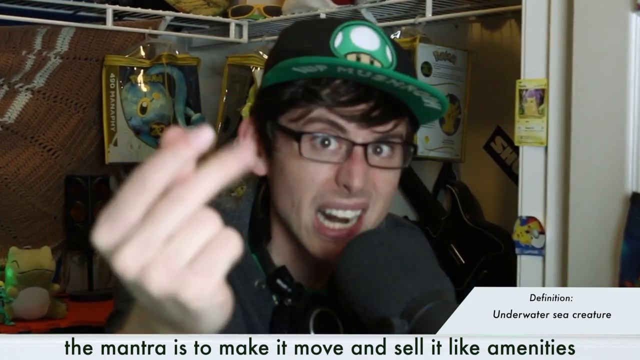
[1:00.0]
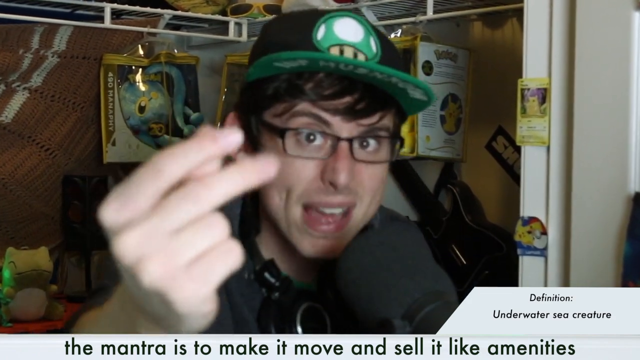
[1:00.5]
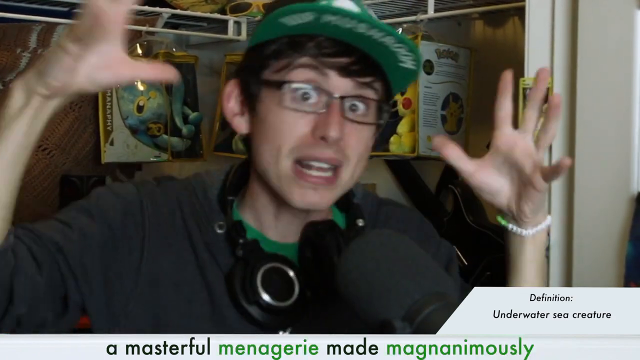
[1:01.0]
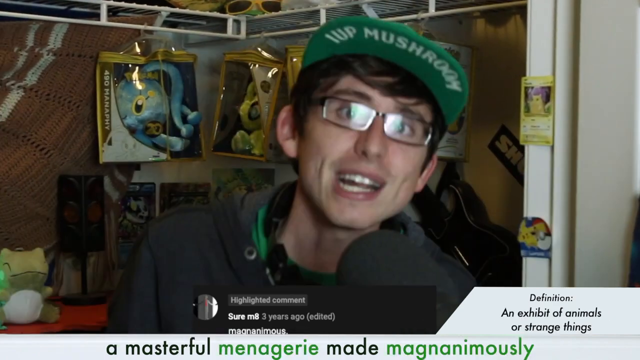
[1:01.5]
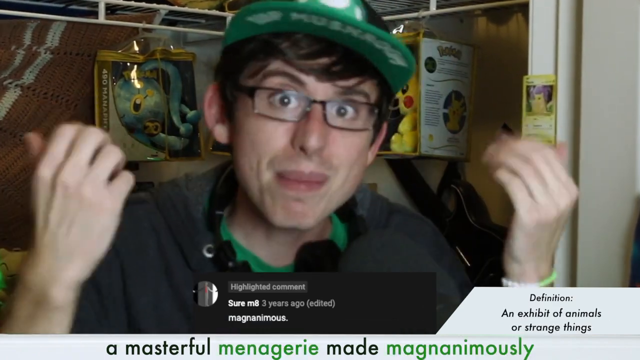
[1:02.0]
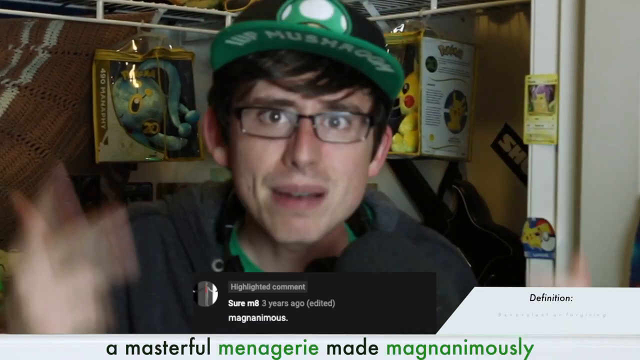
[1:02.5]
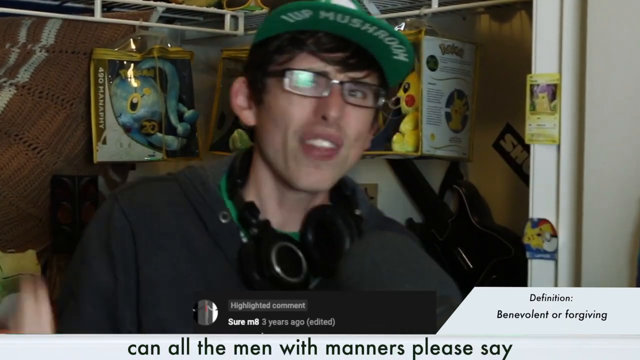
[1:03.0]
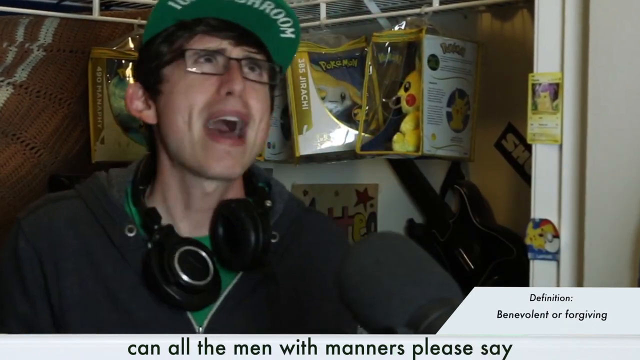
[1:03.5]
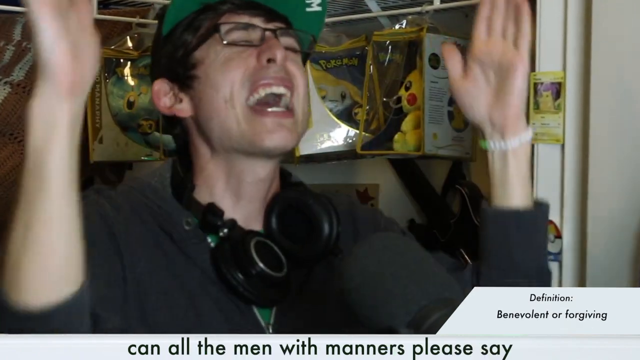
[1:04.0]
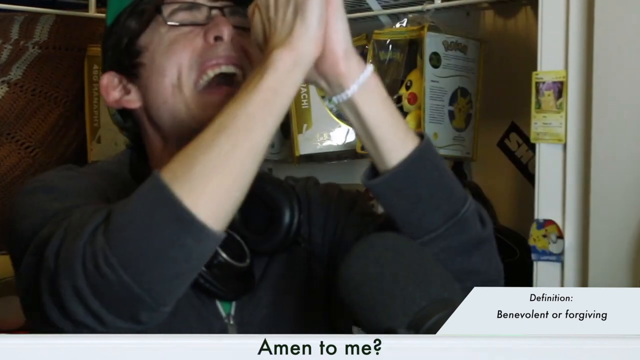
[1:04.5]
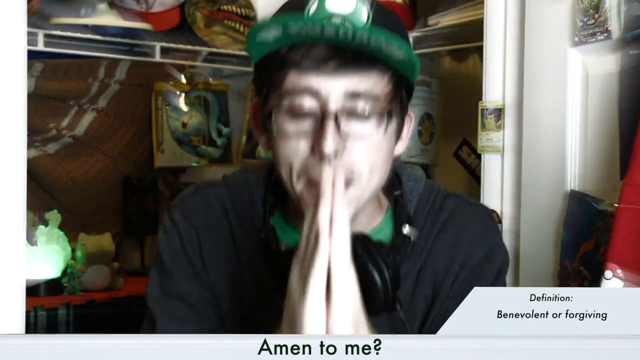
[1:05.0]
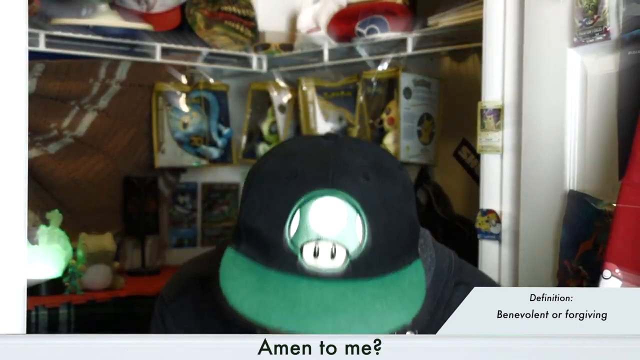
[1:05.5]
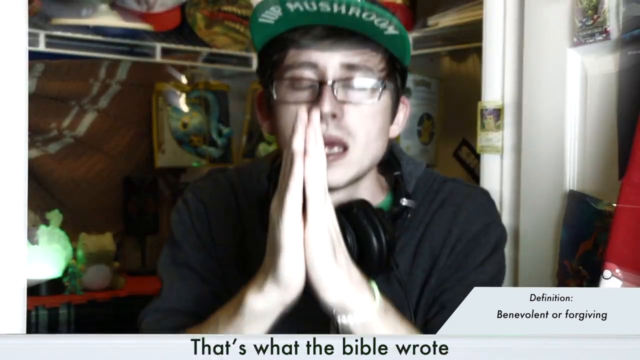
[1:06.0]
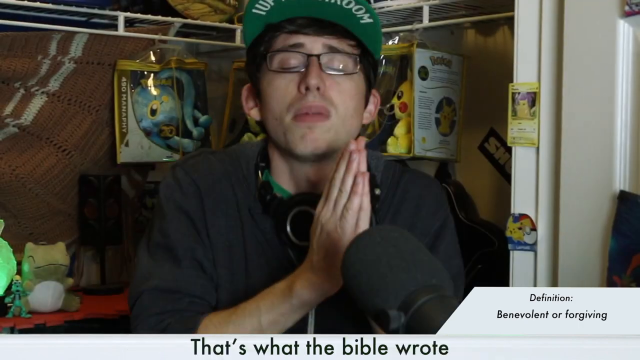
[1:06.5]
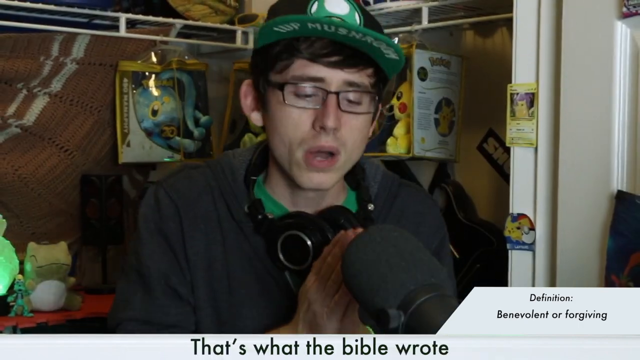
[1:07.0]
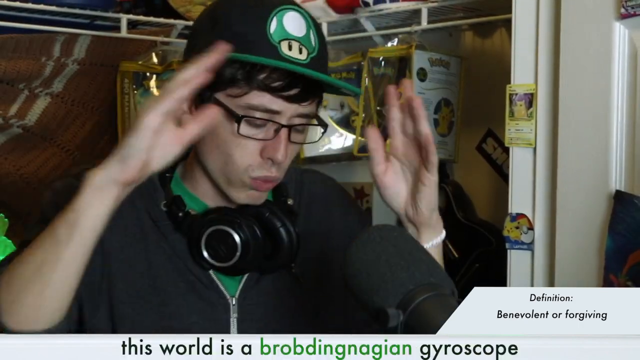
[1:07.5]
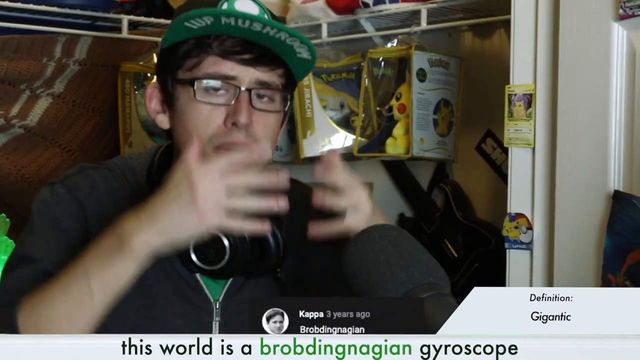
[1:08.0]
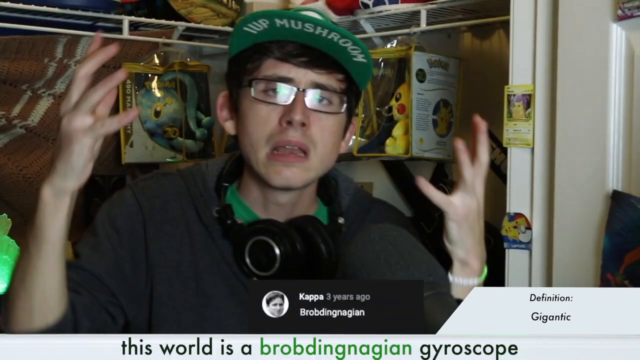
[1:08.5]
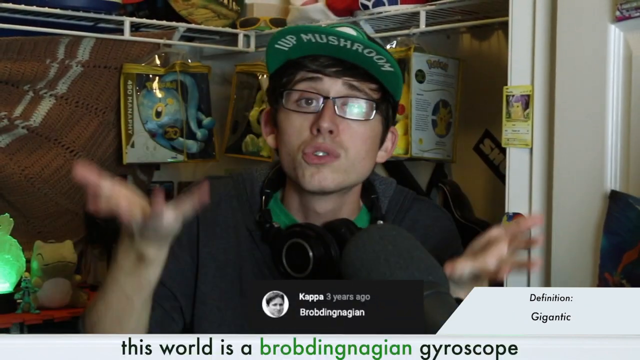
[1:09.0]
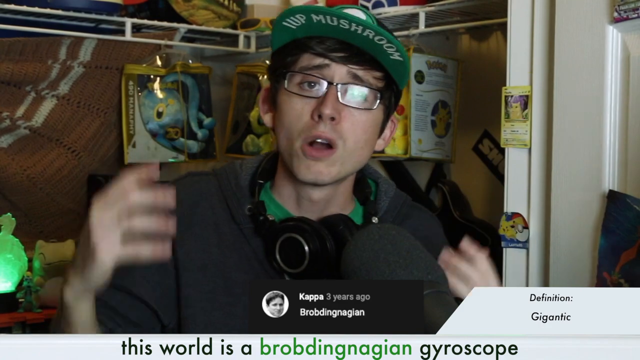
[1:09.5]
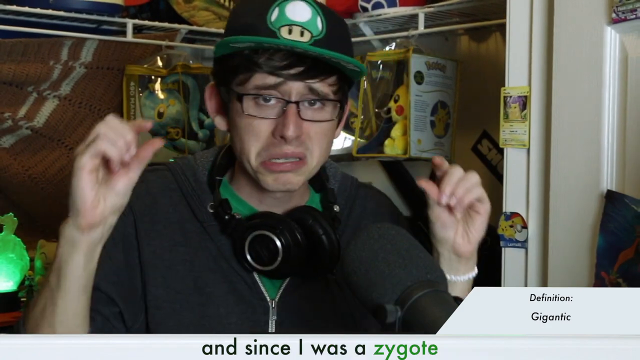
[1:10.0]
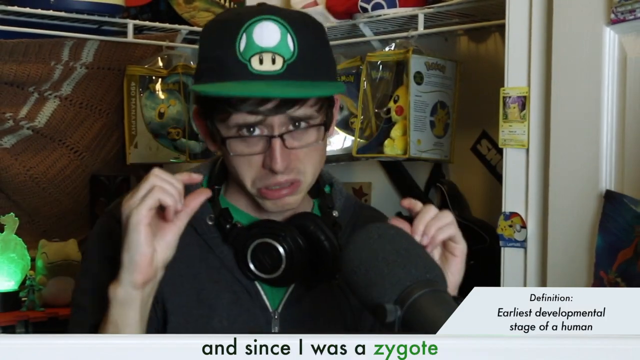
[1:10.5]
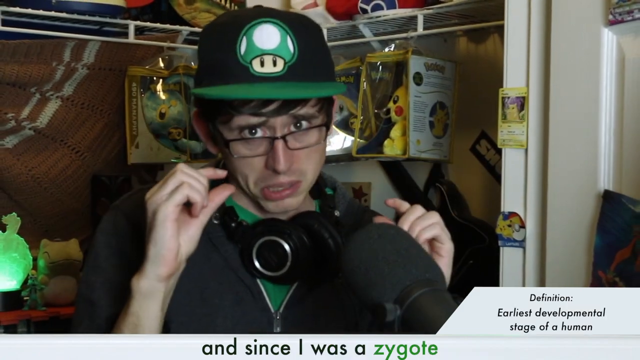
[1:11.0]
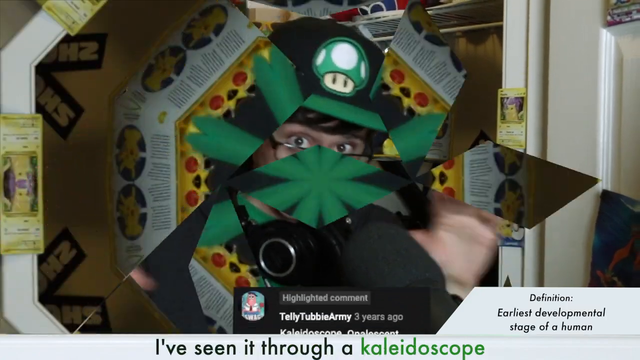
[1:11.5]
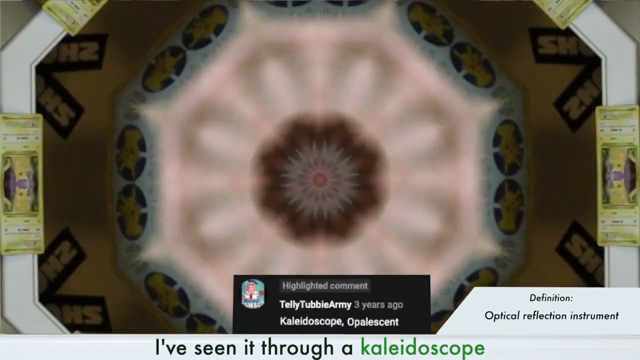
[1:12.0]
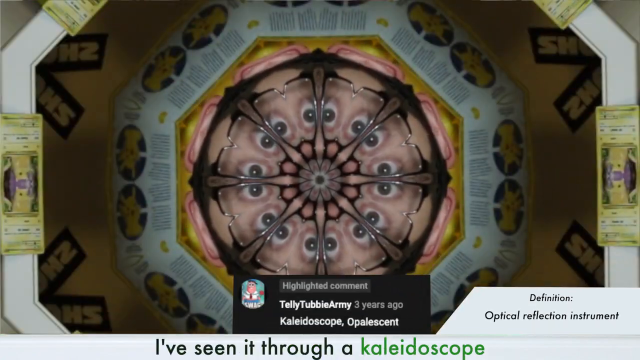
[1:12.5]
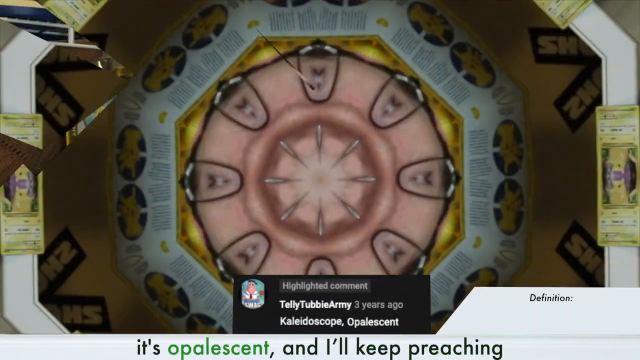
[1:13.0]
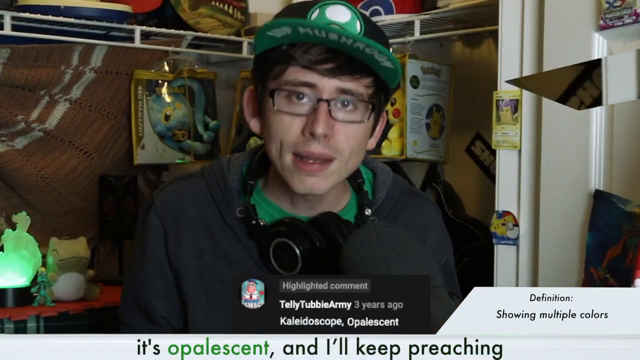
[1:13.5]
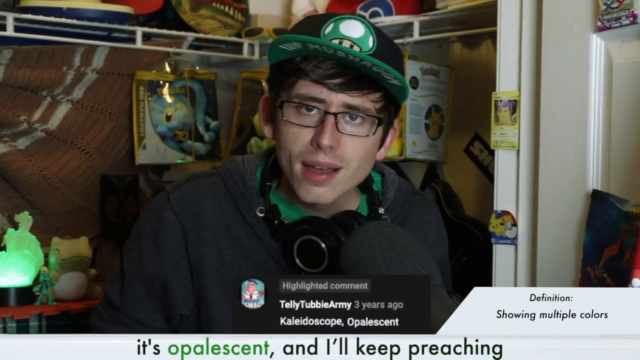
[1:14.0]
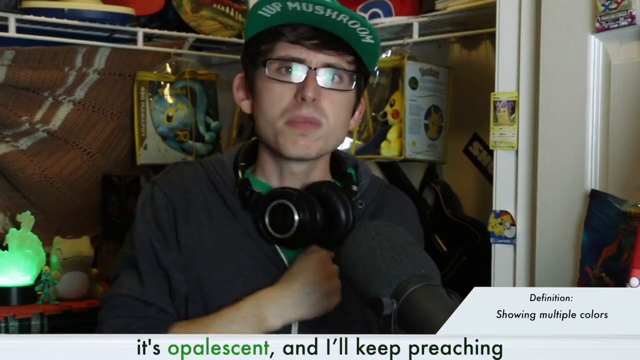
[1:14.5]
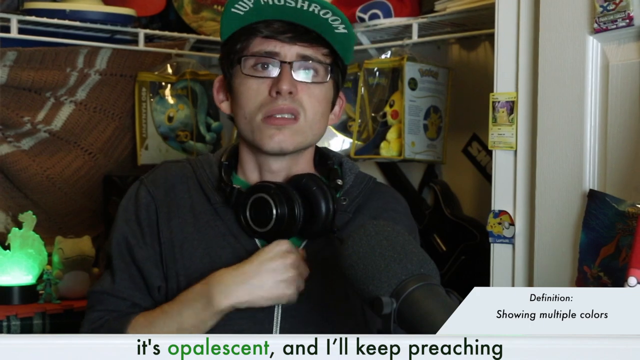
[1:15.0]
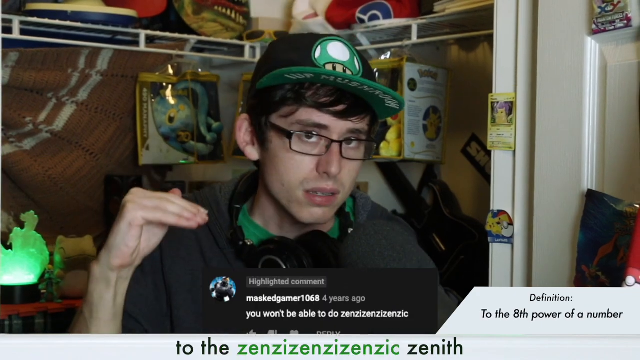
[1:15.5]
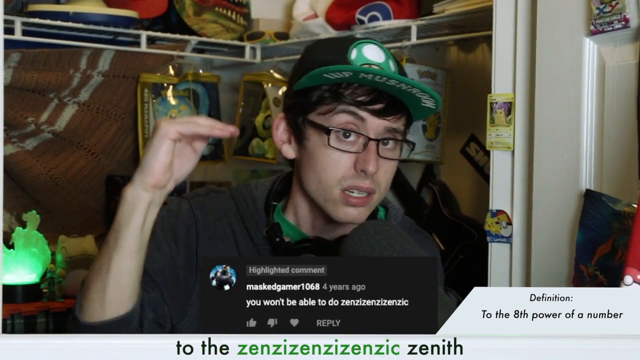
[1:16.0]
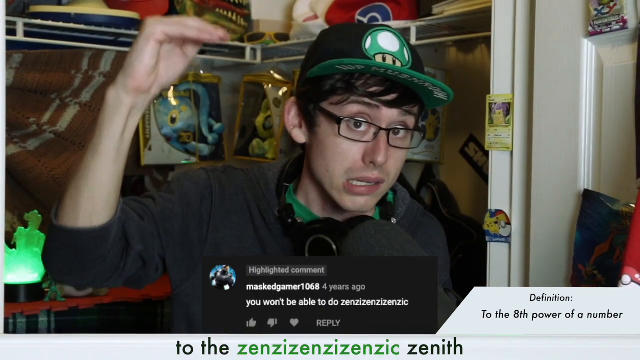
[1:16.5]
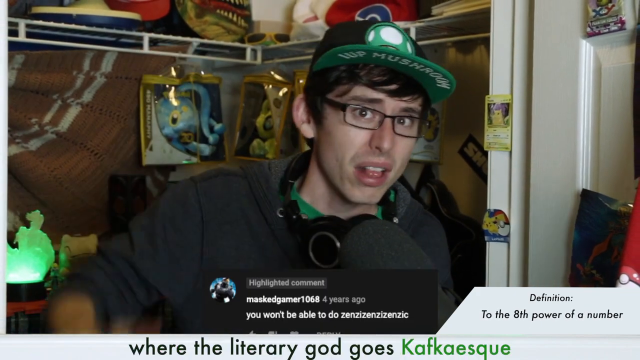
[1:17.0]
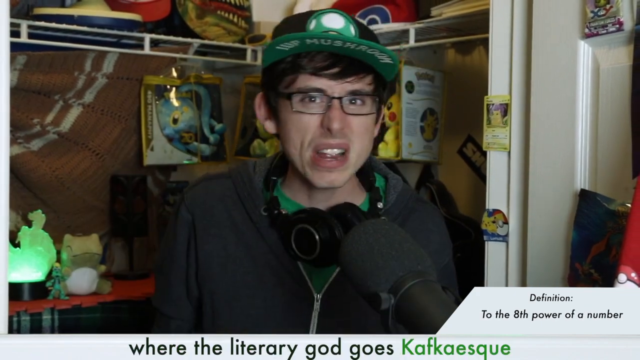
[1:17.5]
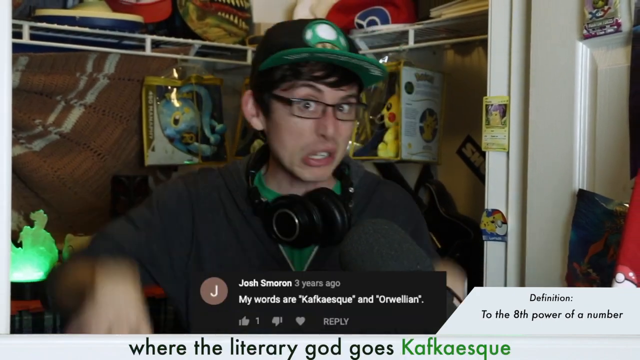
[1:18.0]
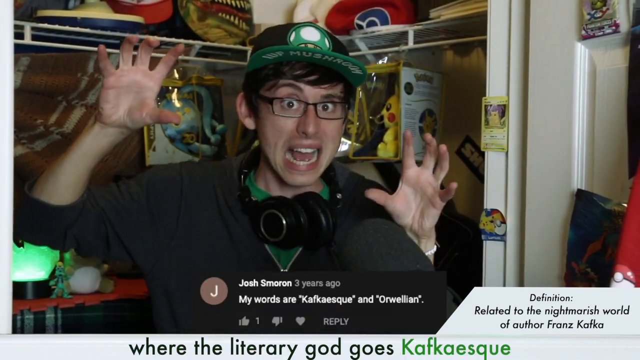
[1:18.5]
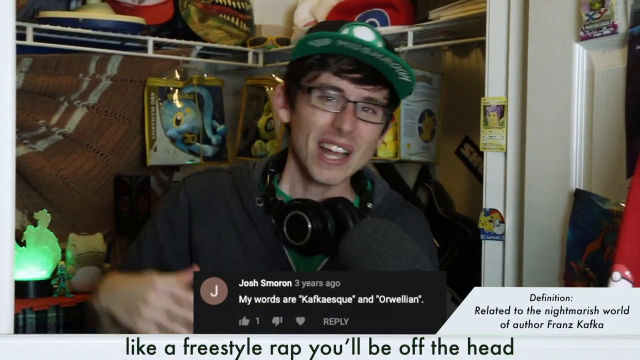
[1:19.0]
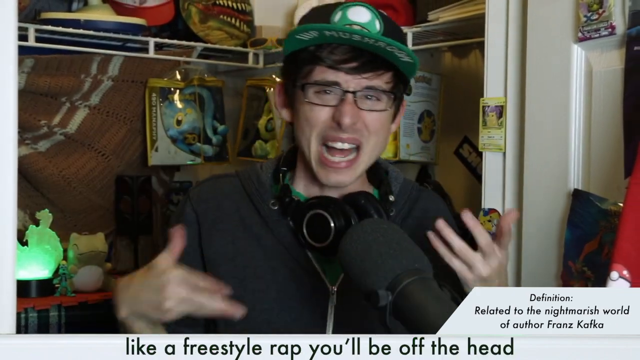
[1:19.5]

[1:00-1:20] The man rubs his first three fingers together in the sign for money, and a comment from Sure m8, "magnanimous", pops up as the definition changes. He bows to the camera with his hands together. The next comment, from Kappa from 3 years ago, is "Brbdingnagian", and the definition changes to "Gigantic". The rapper uses his hands to emphasize his lines and holds both hands with thumb and pointer finger close together but not touching, indicating something small. The screen changes so that it looks like a view through a kaleidoscope as a comment from TellyTubbieArmy appears reading "Kaledisoscope Opalescent", with the definition changing accordingly. The screen returns to the camera view of the man in front of his closet. A comment from maskedgamer1068 appears, "you won't be able to do zenzizenzizenzic", and the definition changes to that word.